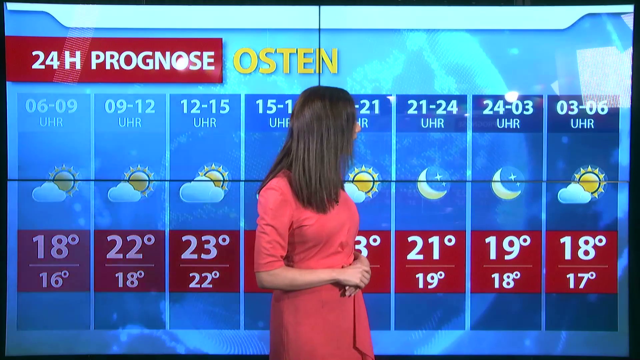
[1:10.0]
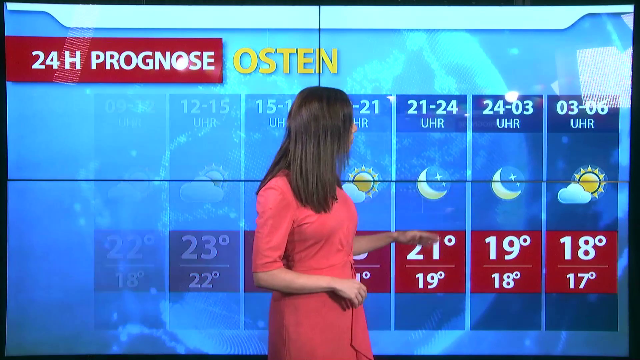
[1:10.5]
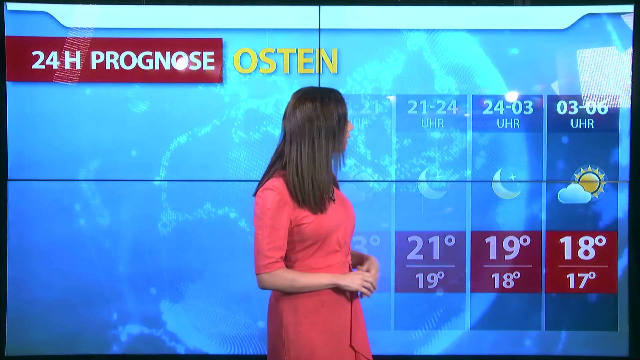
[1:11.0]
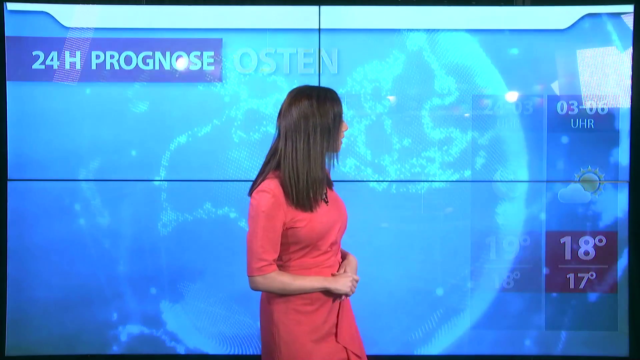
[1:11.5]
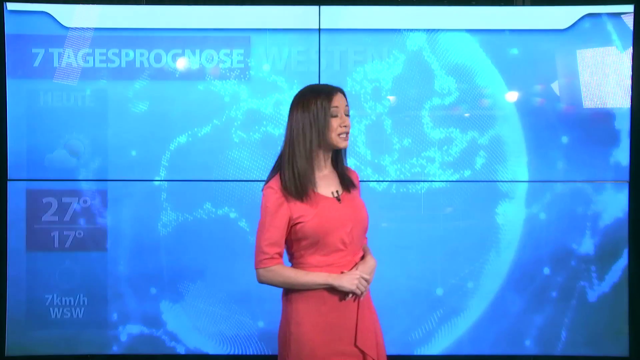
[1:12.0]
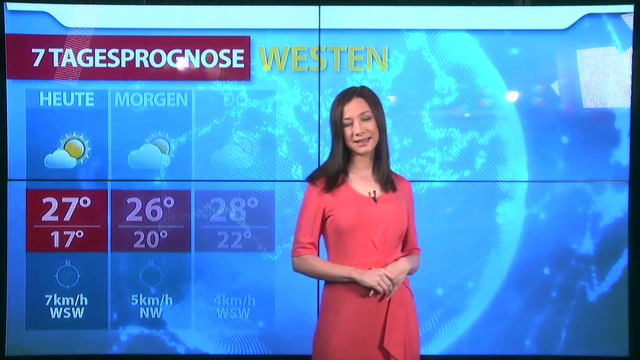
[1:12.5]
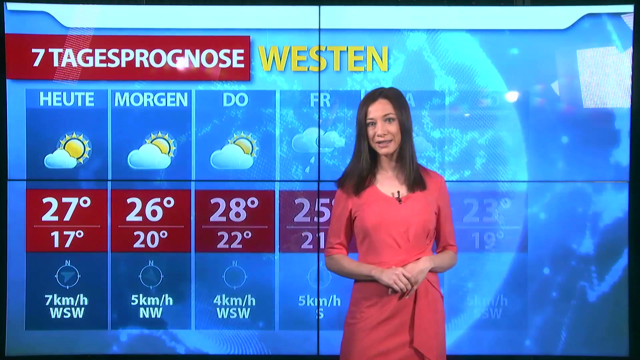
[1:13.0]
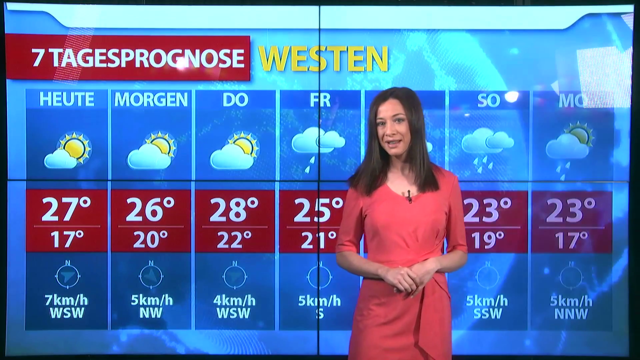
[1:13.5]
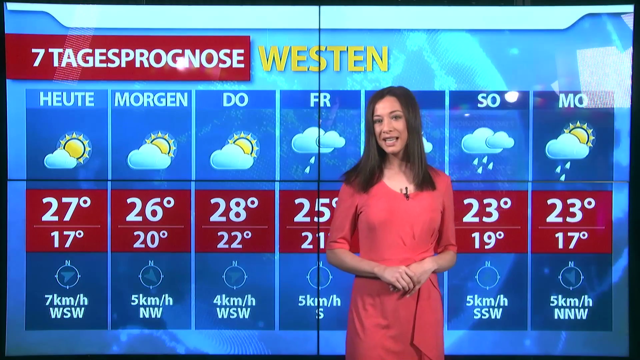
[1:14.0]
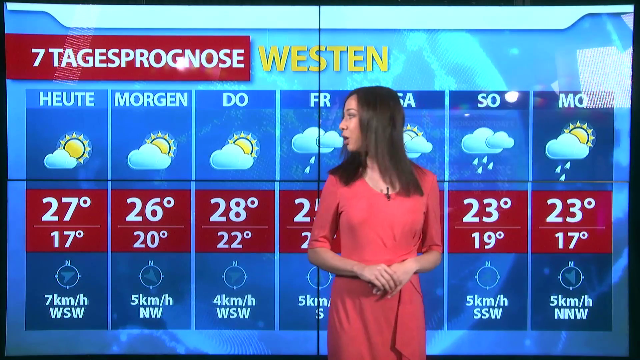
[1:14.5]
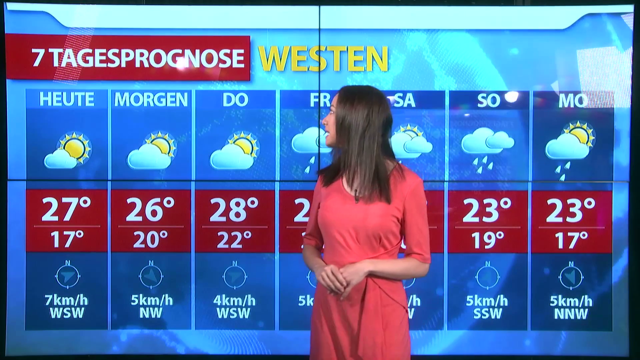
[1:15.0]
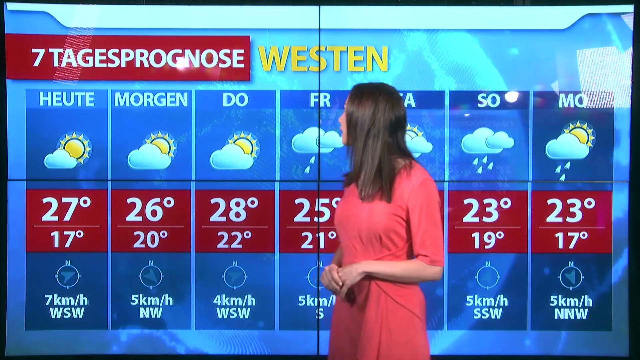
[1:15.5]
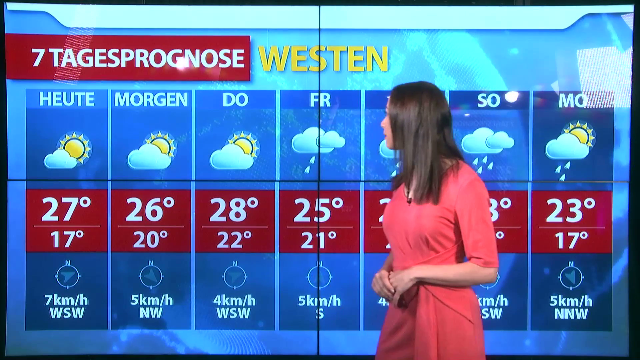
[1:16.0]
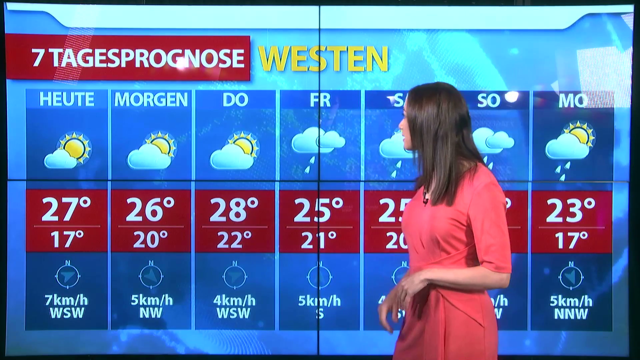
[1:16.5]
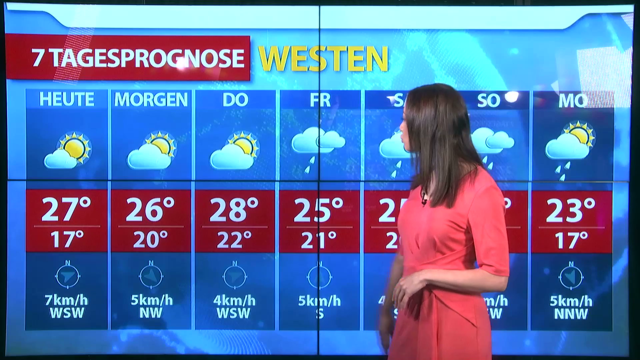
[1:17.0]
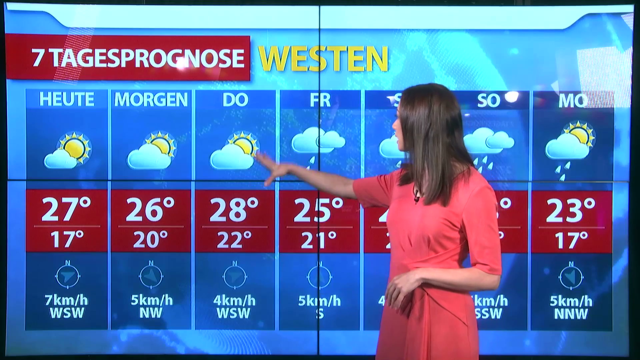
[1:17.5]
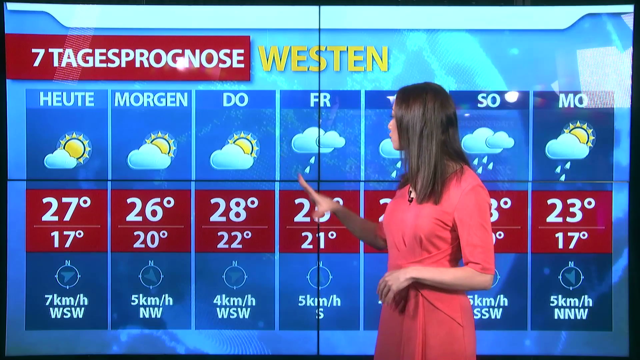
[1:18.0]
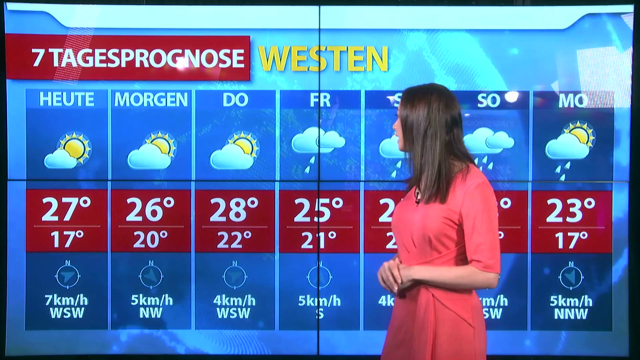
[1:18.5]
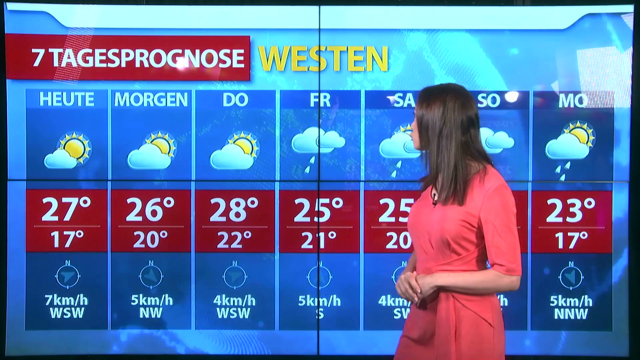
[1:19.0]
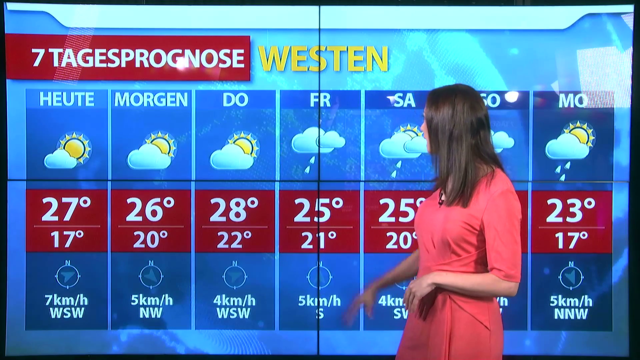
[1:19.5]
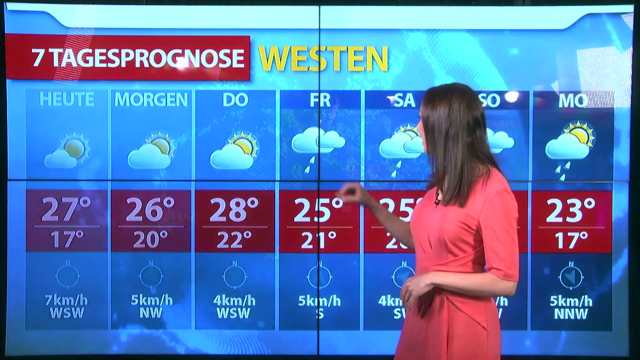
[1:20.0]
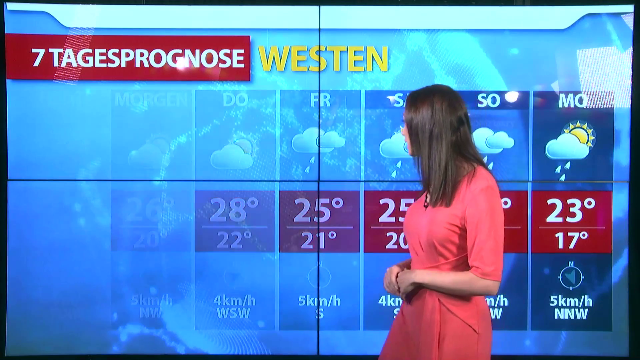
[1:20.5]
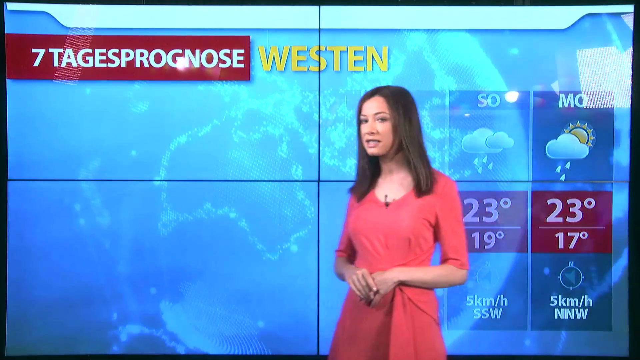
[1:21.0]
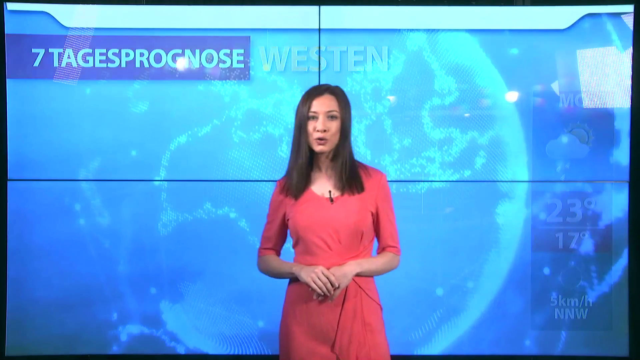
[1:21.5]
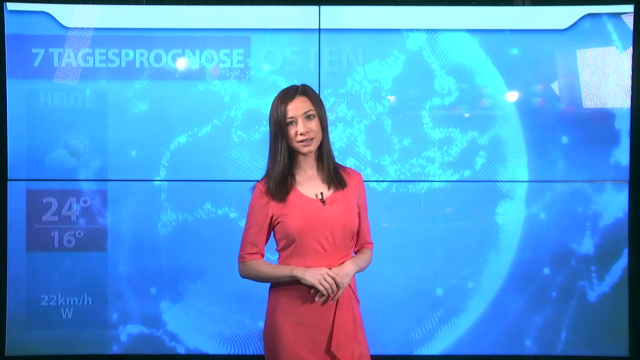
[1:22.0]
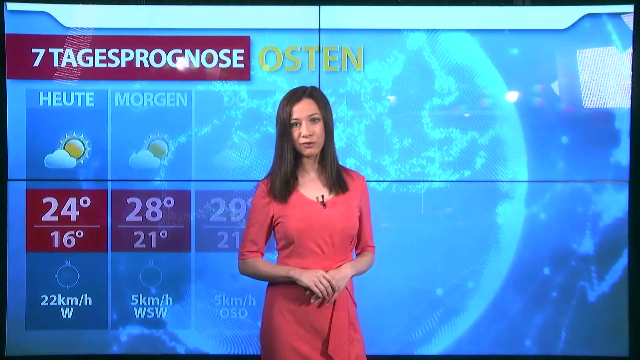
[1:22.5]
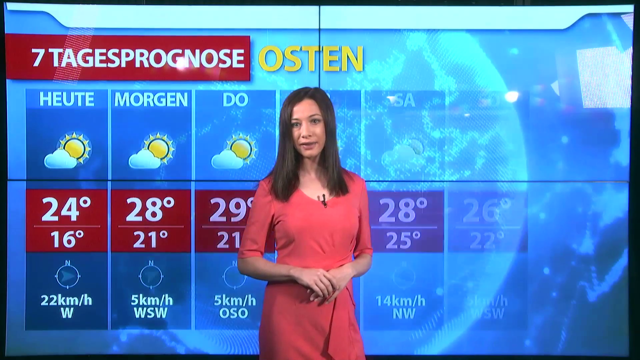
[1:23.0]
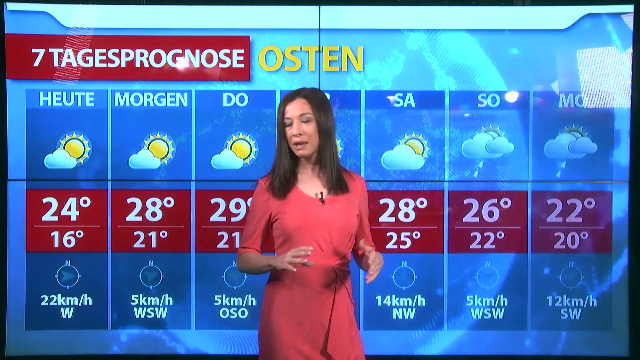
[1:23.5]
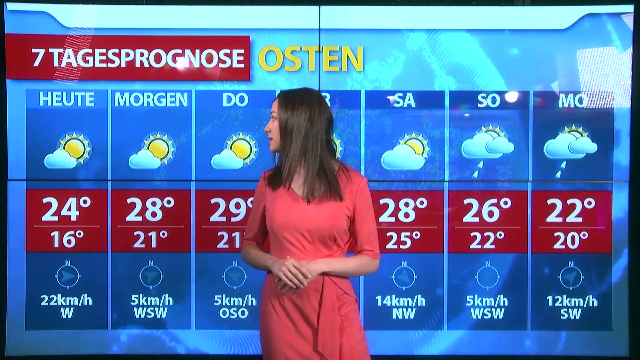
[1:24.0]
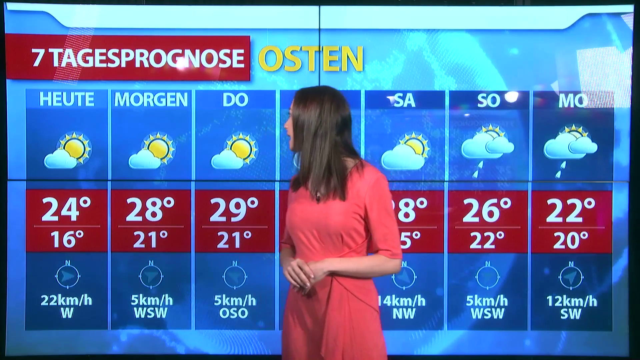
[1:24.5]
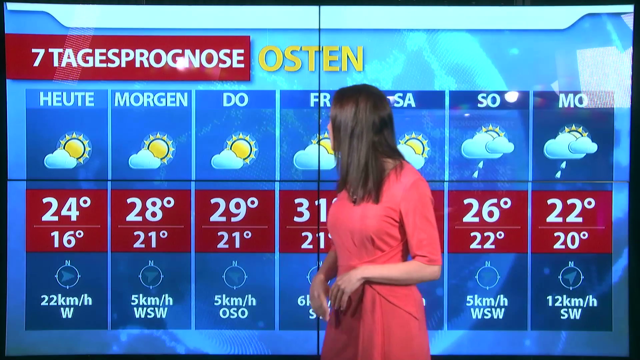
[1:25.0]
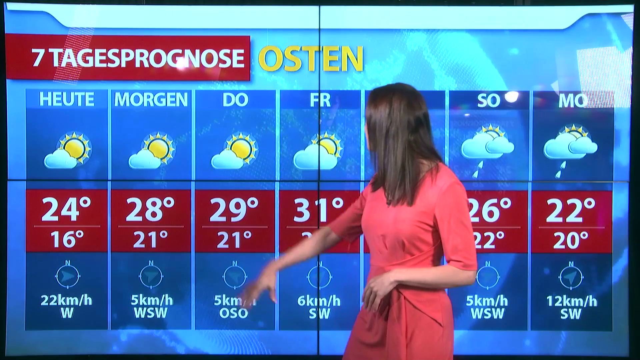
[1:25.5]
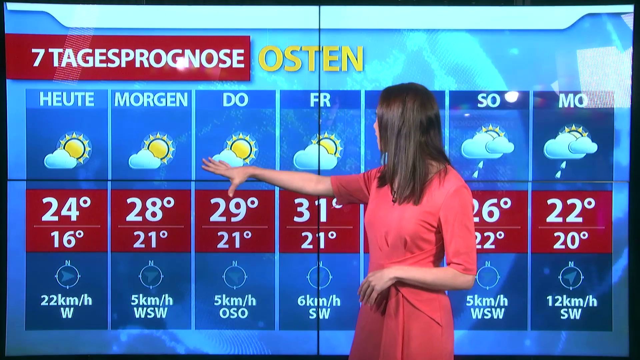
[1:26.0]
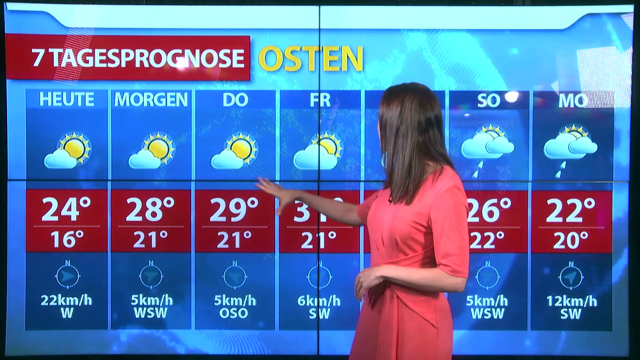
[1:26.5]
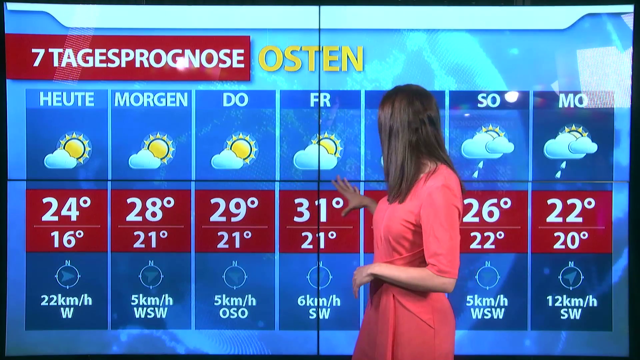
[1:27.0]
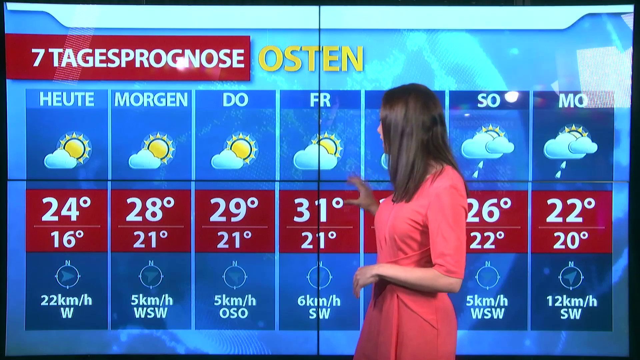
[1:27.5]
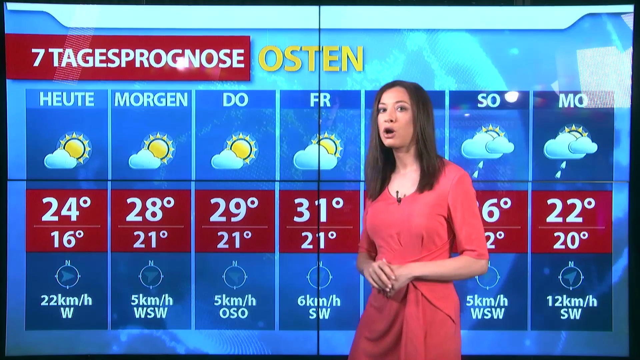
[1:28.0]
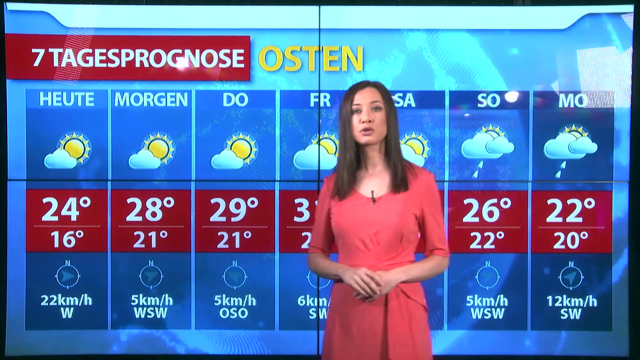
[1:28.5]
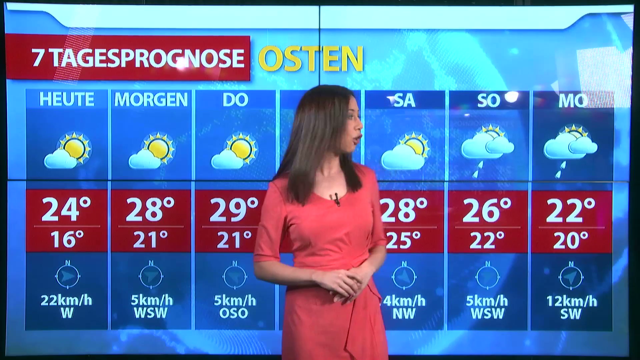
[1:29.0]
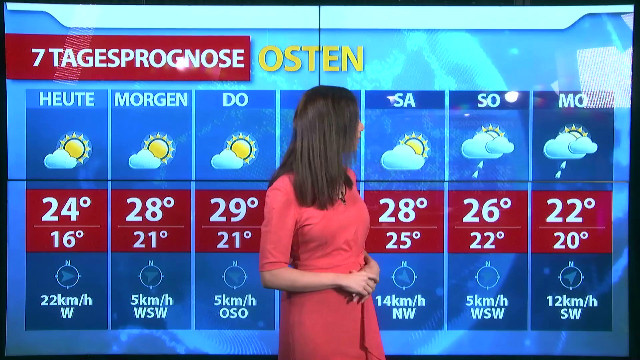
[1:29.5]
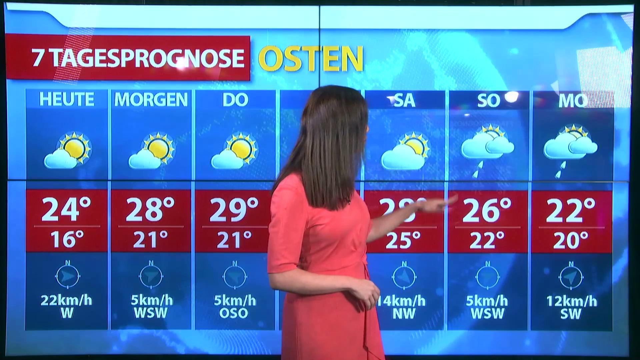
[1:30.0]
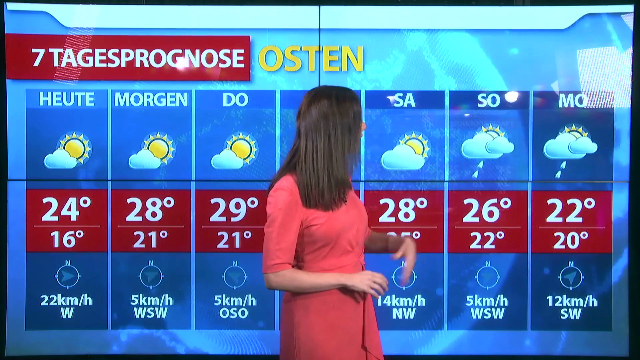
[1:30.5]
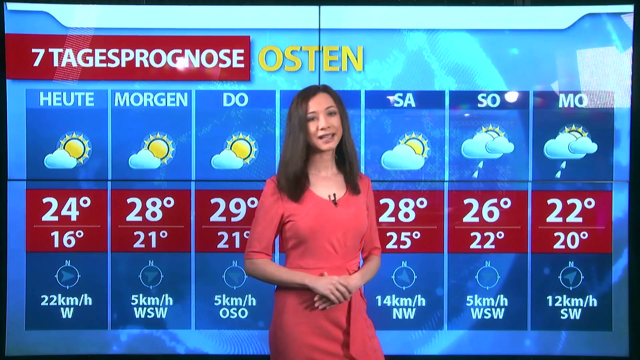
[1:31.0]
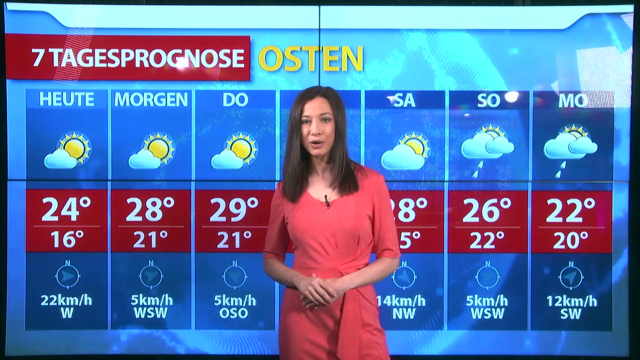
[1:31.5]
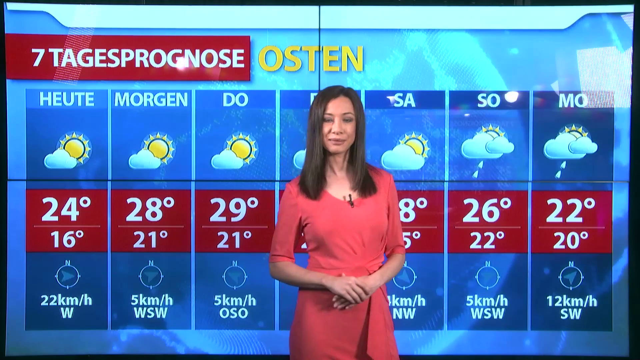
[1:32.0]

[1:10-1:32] The hourly forecast continues into the evening: from 9 p.m. to 12 a.m. the lowest will be 19 and the highest 21, from 12 a.m. to 3 a.m. the lowest will be 18 and the highest 19, and from 3 a.m. to 6 a.m. the lowest will be 17 and the highest 18. The weather forecast changes again to show forecasts for different areas: HUTE will be 17 to 27, Morgan 20 to 26, Doe 22 to 28, Frye 21 to 26, and S.A. 26 to 20.